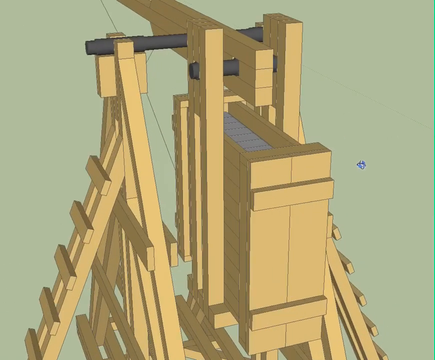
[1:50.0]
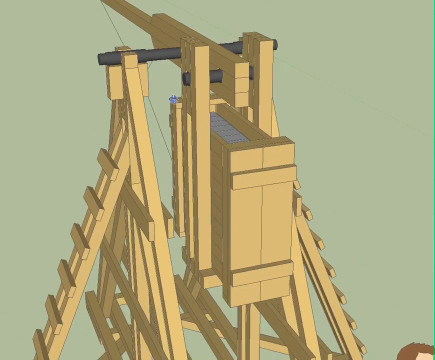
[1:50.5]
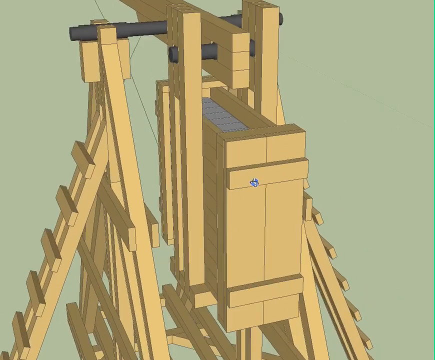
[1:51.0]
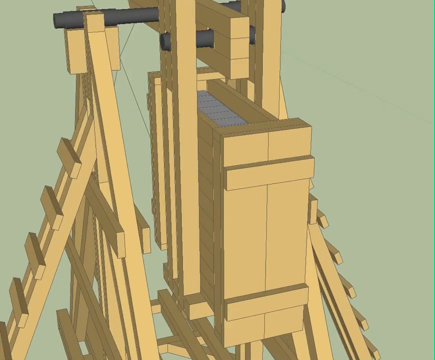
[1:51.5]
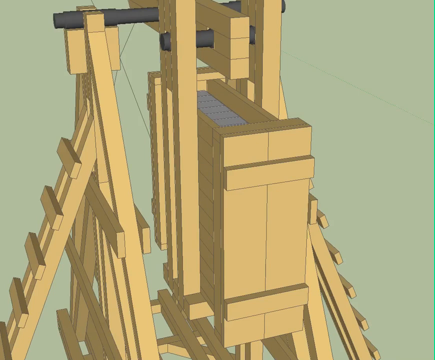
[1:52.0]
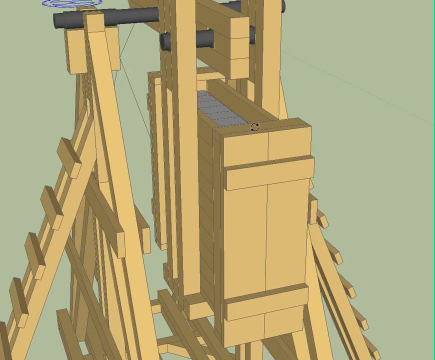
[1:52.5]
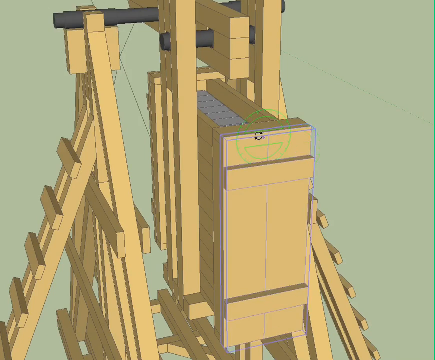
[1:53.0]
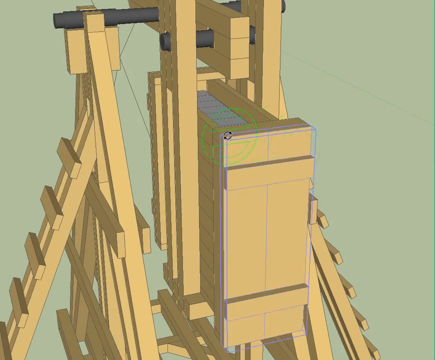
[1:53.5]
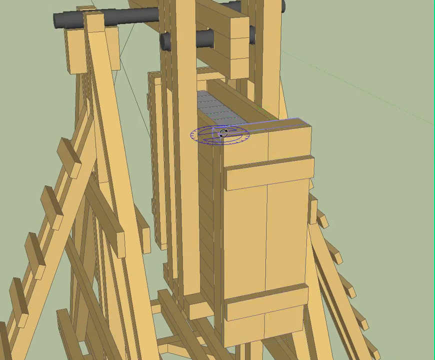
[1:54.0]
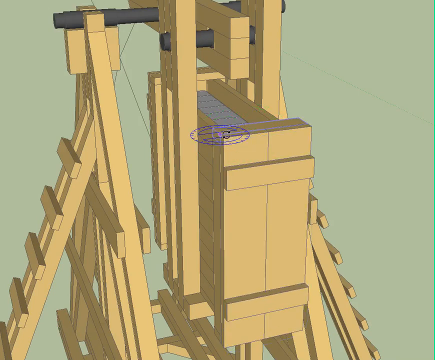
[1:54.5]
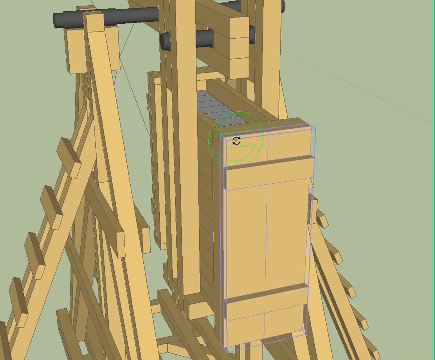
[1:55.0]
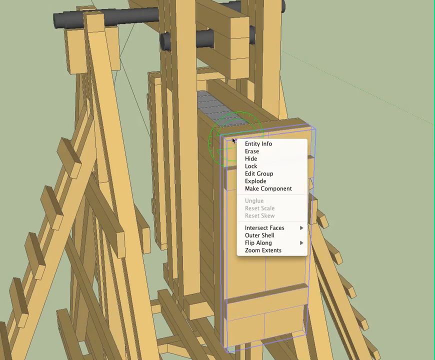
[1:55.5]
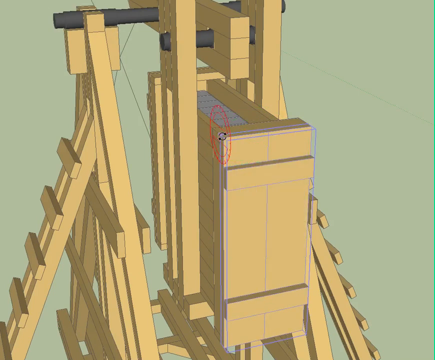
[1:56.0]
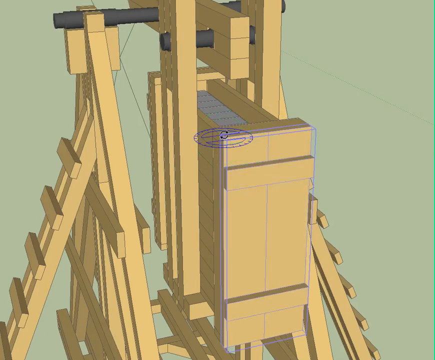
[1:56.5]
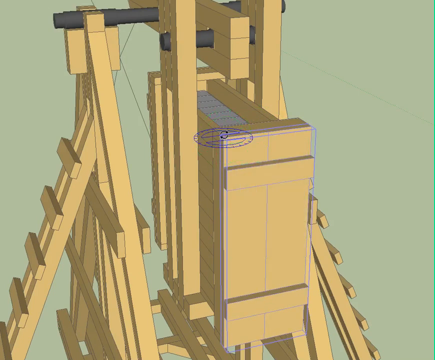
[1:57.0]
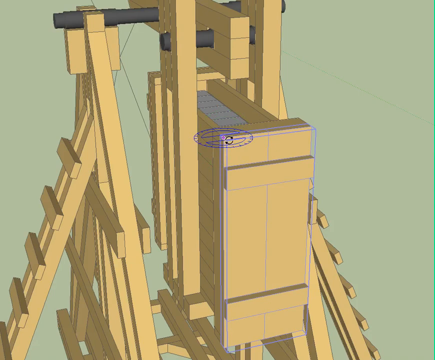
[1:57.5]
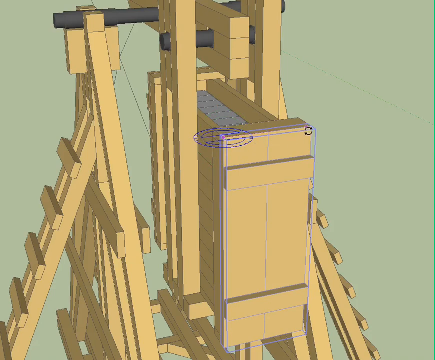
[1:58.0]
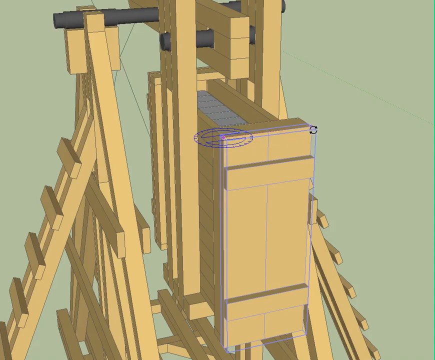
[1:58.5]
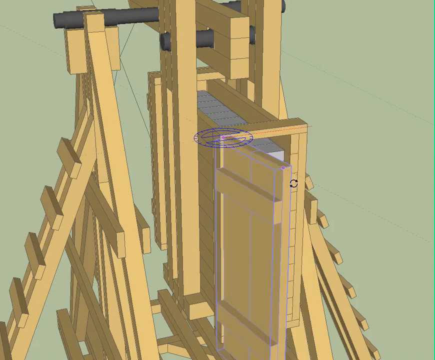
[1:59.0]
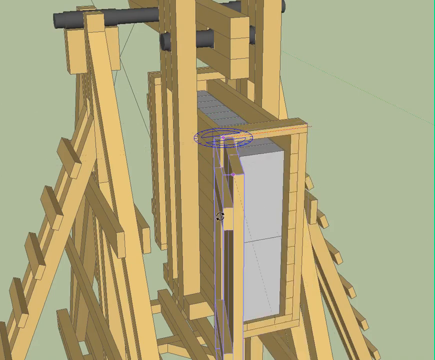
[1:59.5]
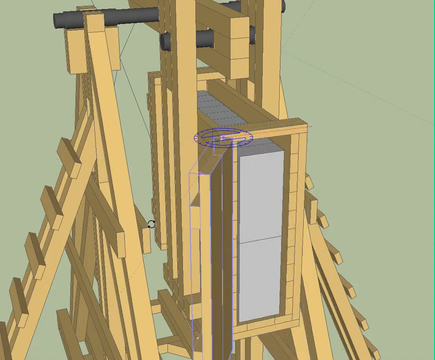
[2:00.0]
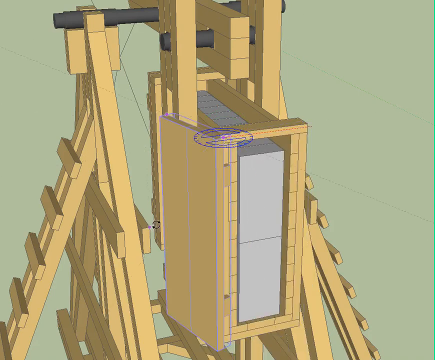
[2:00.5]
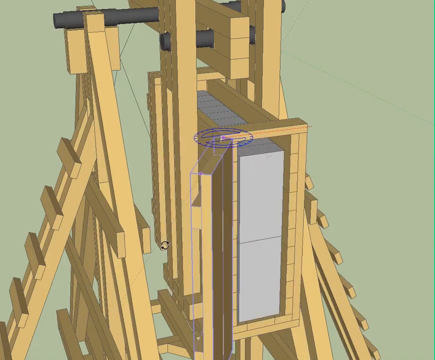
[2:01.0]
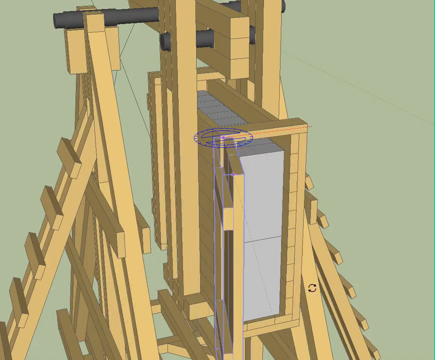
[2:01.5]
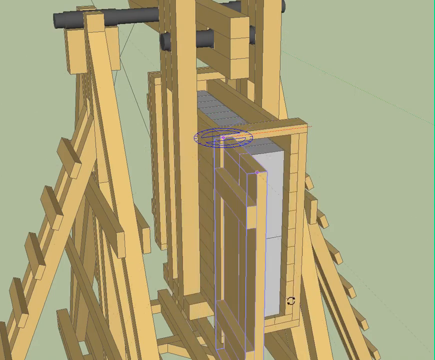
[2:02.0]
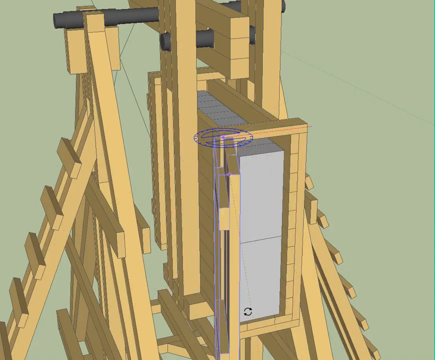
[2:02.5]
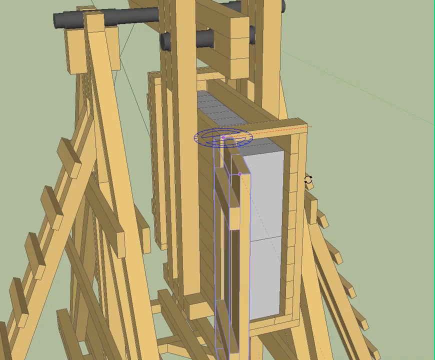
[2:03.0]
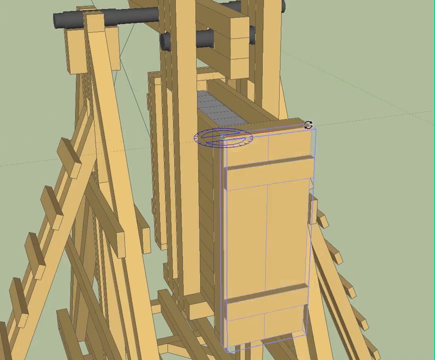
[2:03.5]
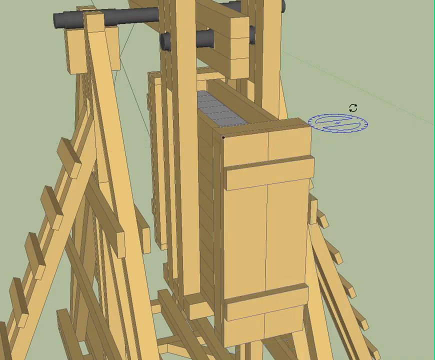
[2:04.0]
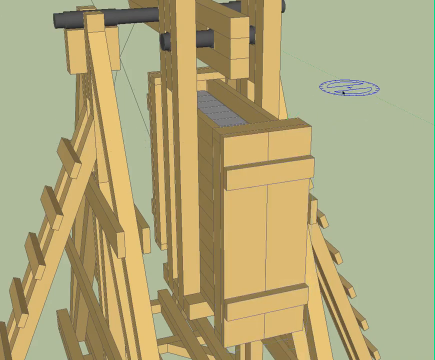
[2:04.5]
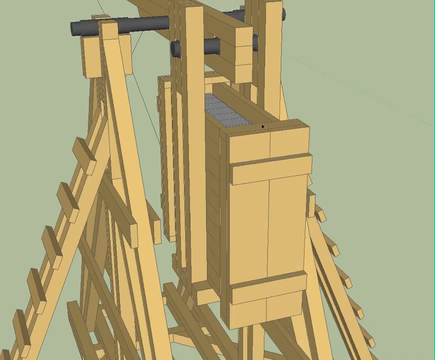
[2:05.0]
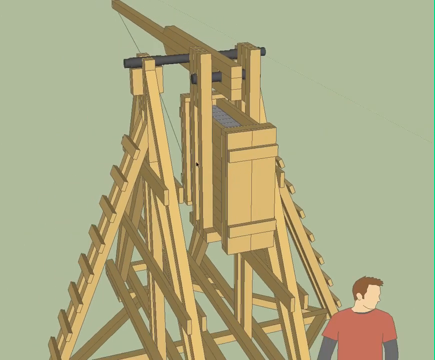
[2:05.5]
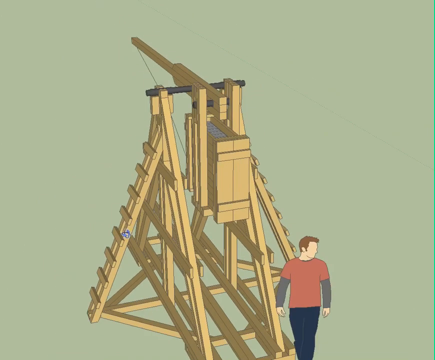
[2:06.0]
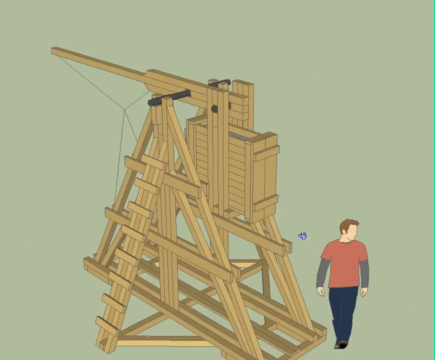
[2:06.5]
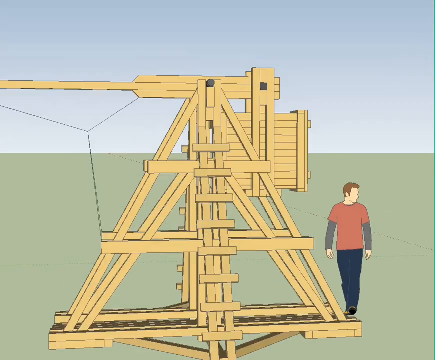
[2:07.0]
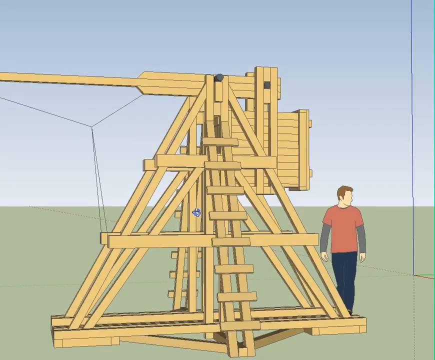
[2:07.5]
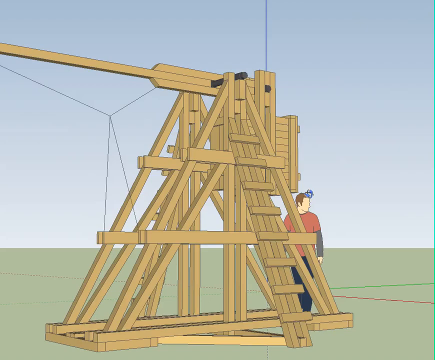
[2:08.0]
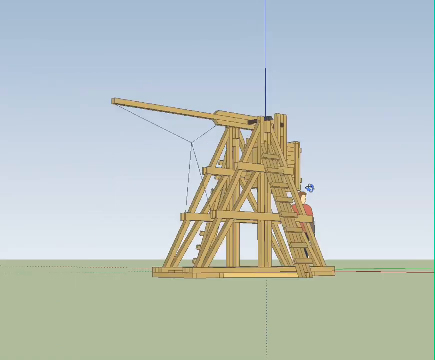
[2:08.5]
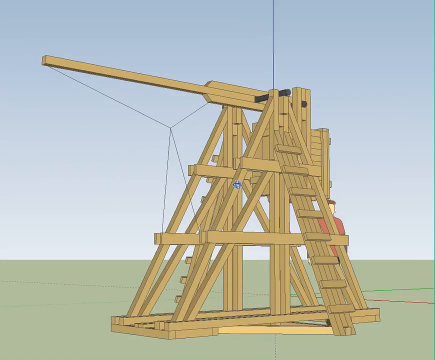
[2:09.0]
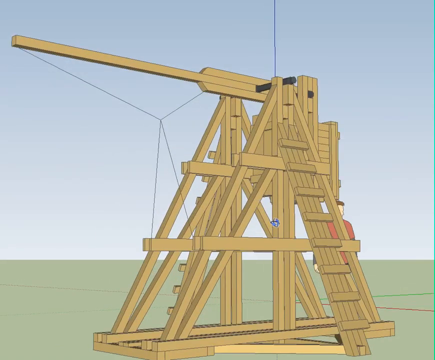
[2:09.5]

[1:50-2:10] The marker goes to the back side of the wood piece, where a glowing, protractor-like circular shape appears on top. It turns green, and after what looks like a right-click, a square is put around it and it becomes a door. A blue side is put on one side but not the other. The green goes onto the front, lays on top, then goes to the bottom, and the door opens and shuts.